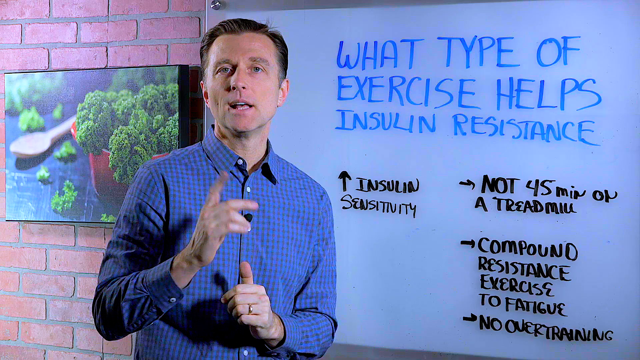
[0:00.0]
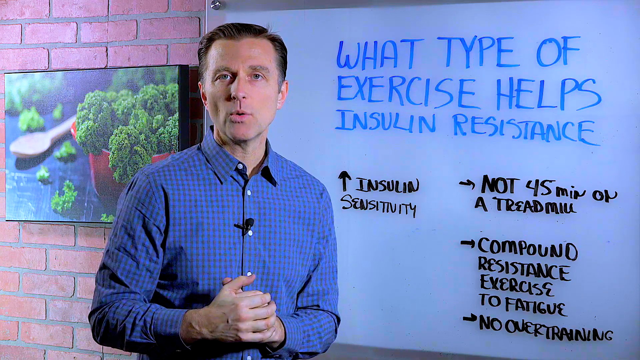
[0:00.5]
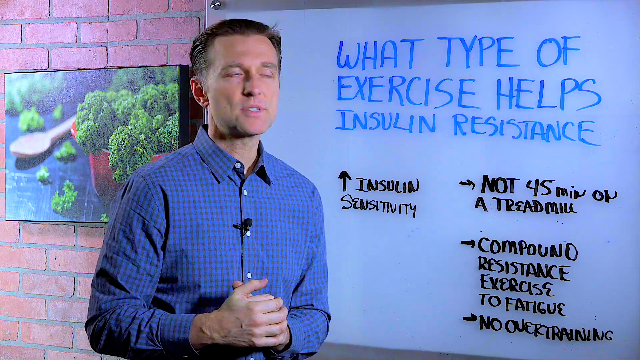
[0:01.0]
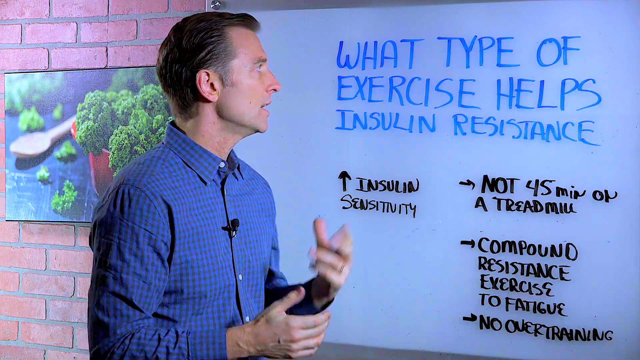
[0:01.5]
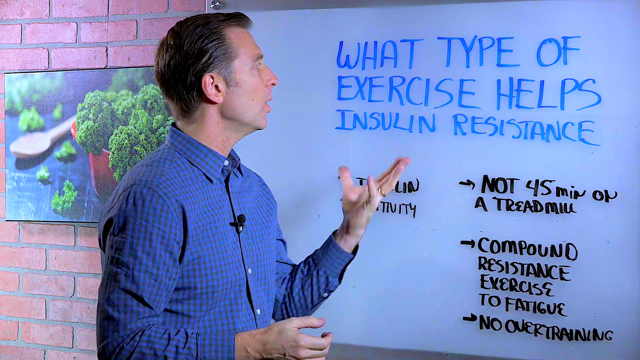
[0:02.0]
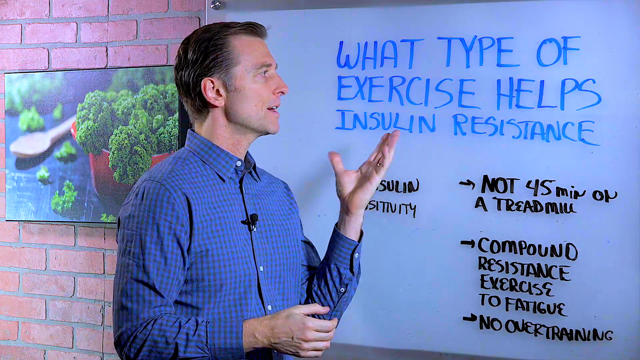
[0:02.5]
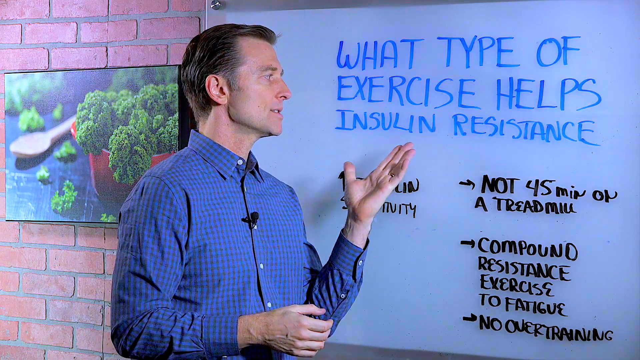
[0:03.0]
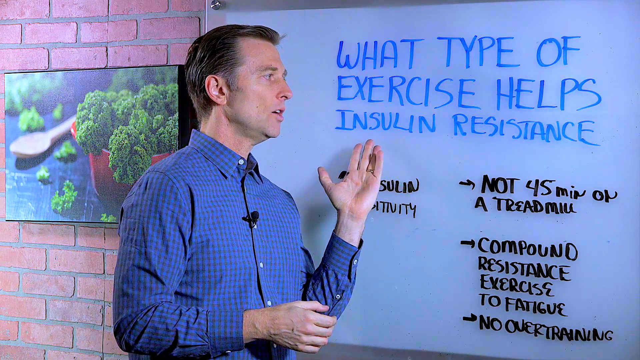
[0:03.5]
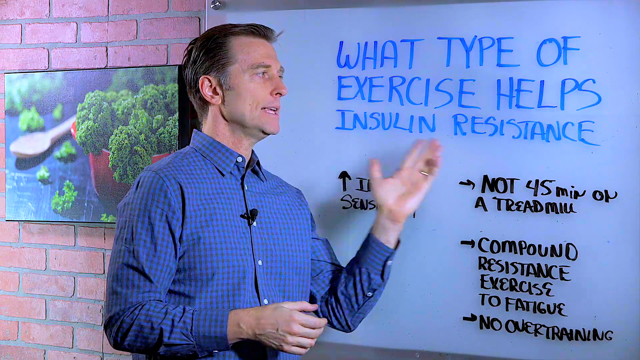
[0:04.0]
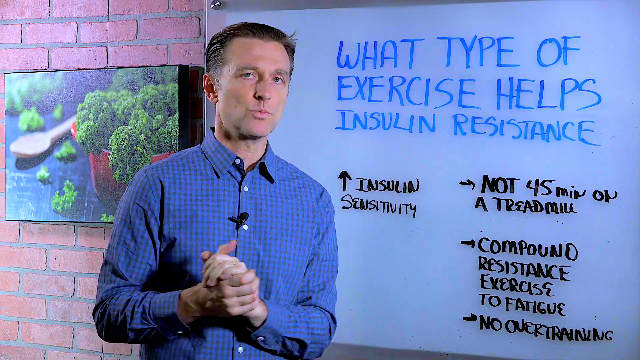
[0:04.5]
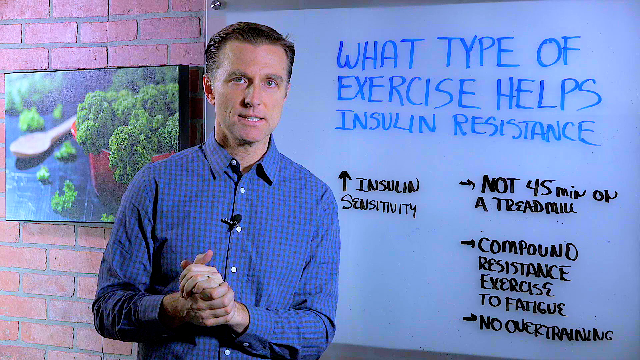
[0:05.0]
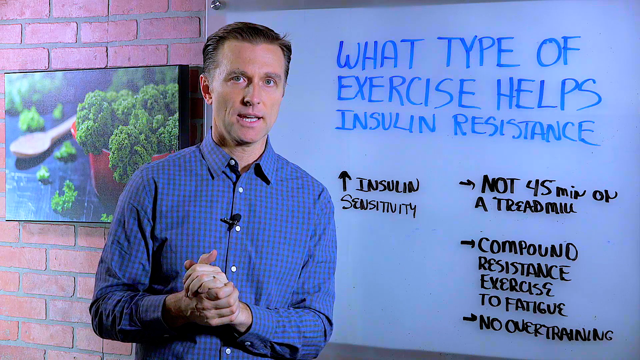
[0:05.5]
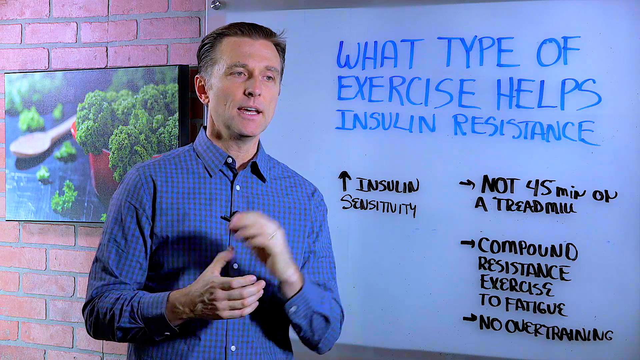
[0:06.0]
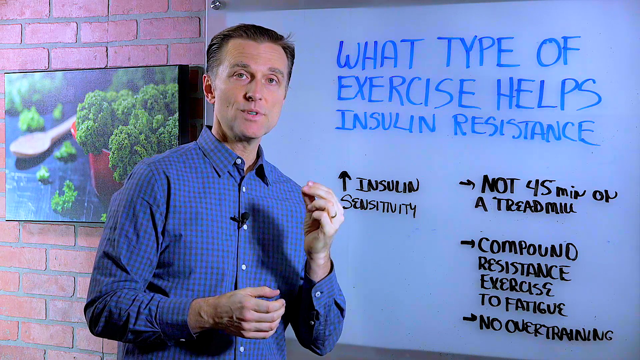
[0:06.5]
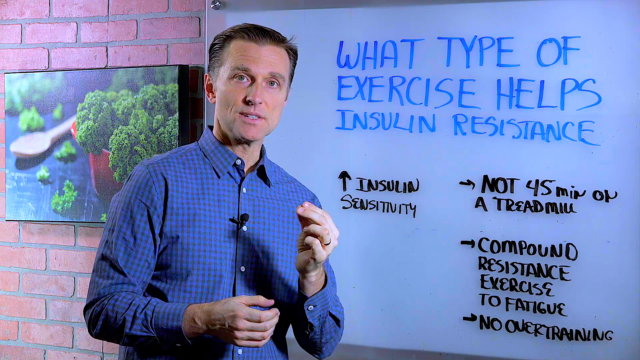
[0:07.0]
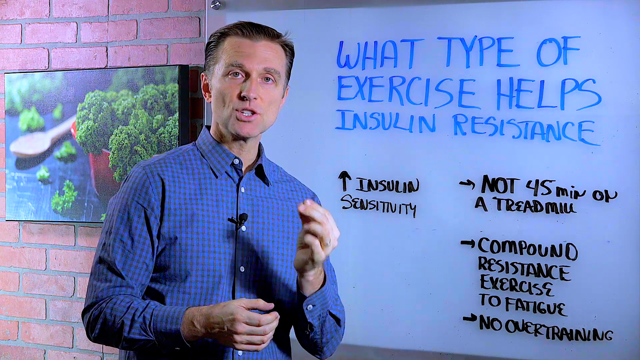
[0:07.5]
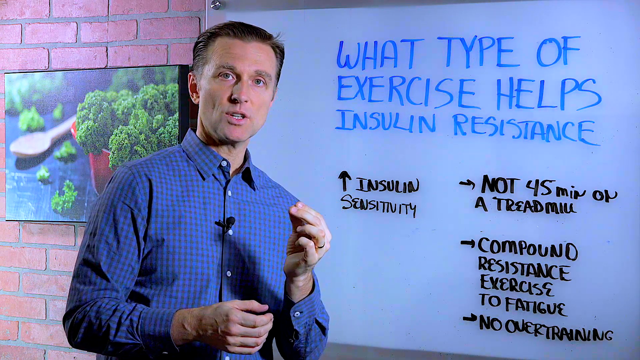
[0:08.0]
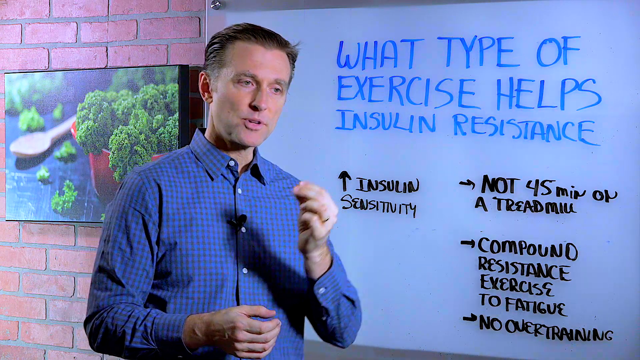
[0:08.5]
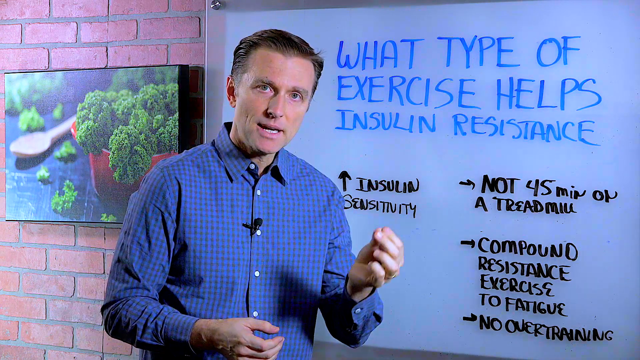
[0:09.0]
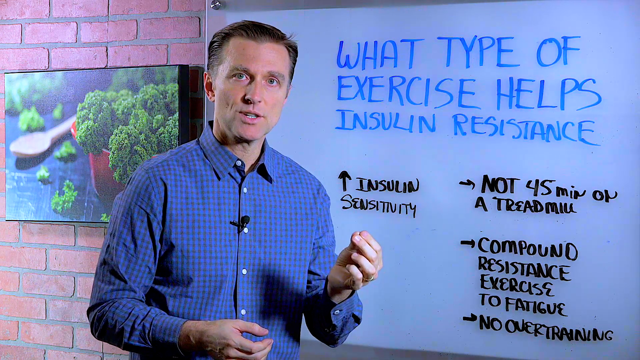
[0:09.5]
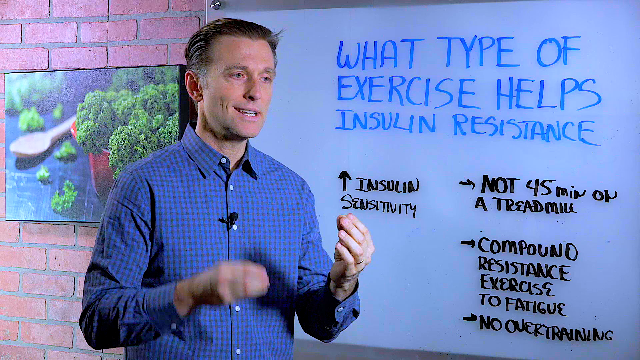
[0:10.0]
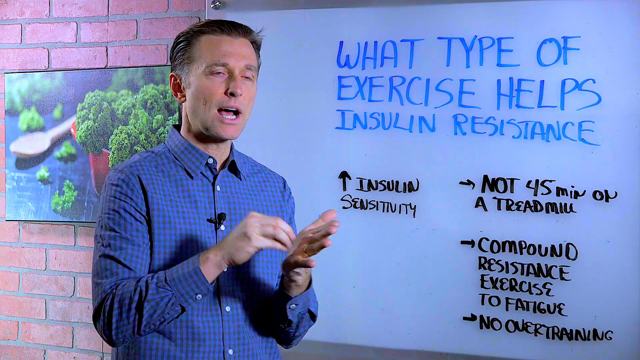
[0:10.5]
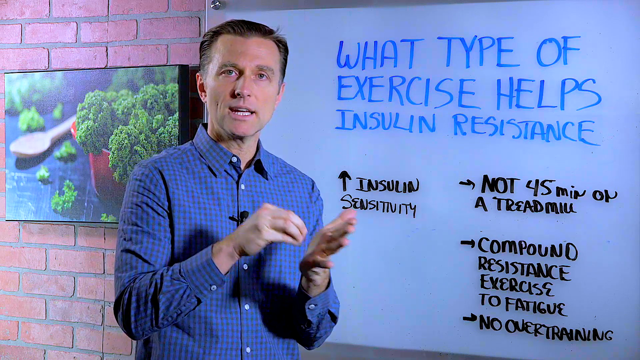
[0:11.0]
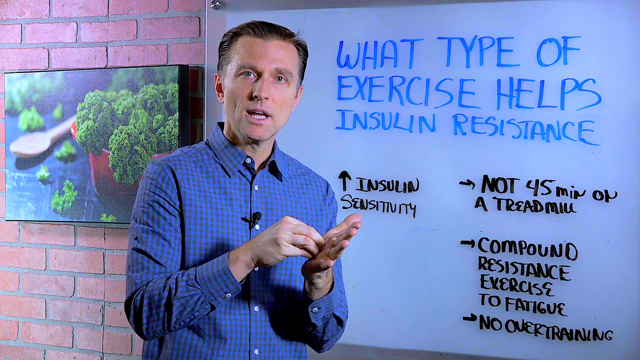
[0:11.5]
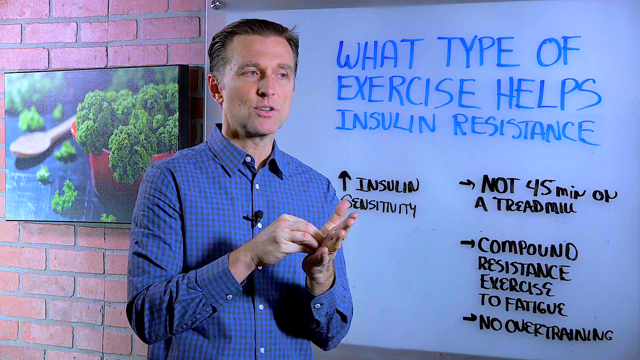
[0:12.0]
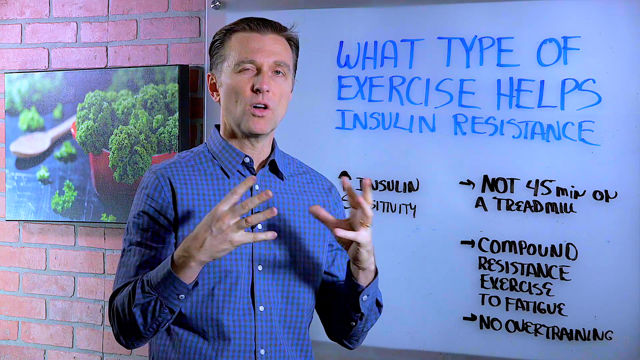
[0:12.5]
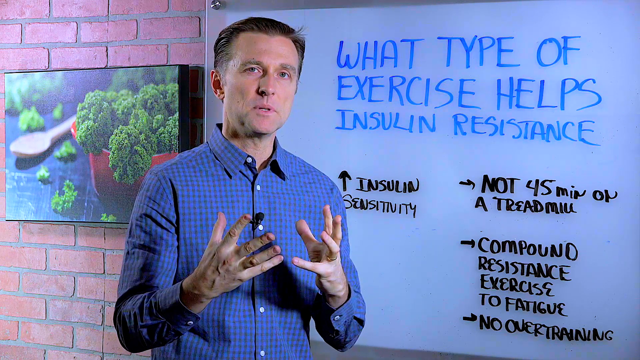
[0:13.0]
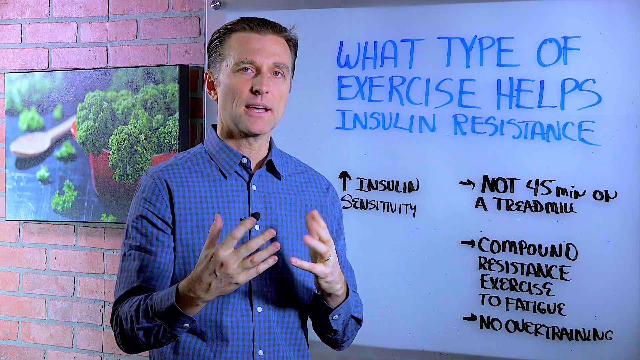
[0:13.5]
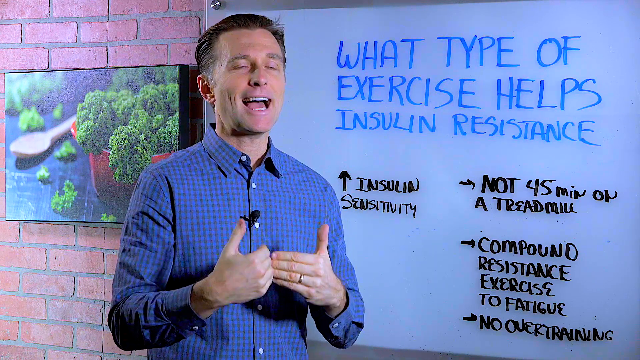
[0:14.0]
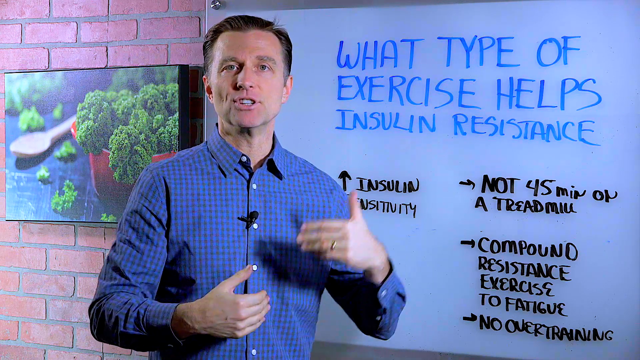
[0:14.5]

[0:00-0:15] A man stands in front of a whiteboard with words written on it. He keeps talking with his hands and repeatedly points to the palm of his hand. In the background is a red picture of a red bowl with what looks like some kind of lettuce coming out of it, with a wooden spoon sitting on the table next to it. The whiteboard is attached to a brick wall.